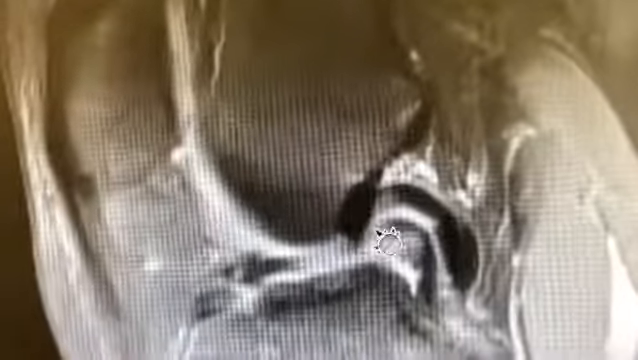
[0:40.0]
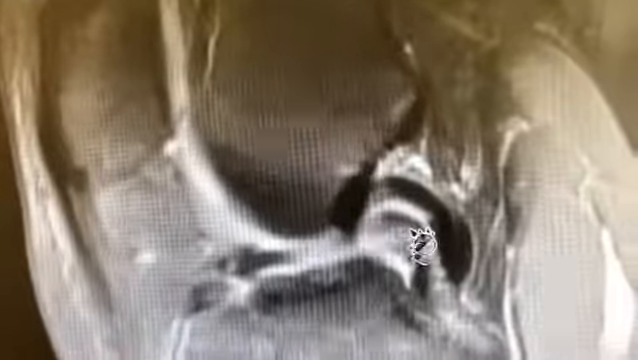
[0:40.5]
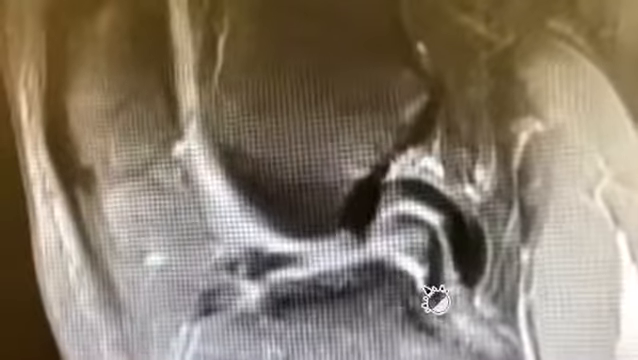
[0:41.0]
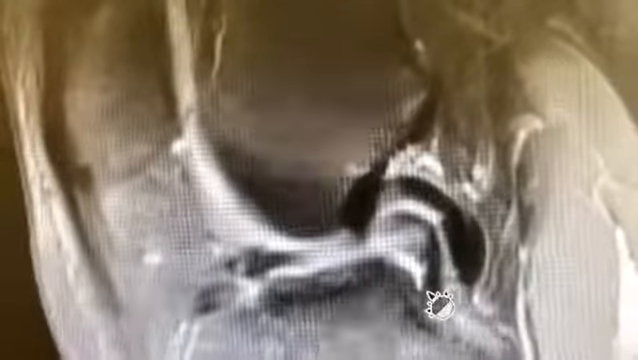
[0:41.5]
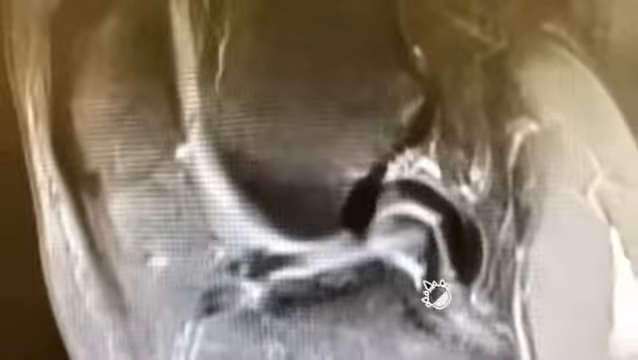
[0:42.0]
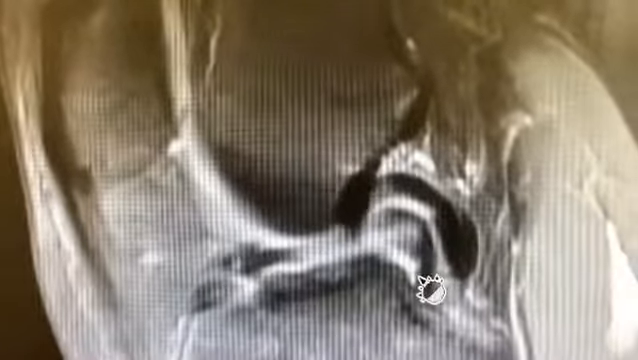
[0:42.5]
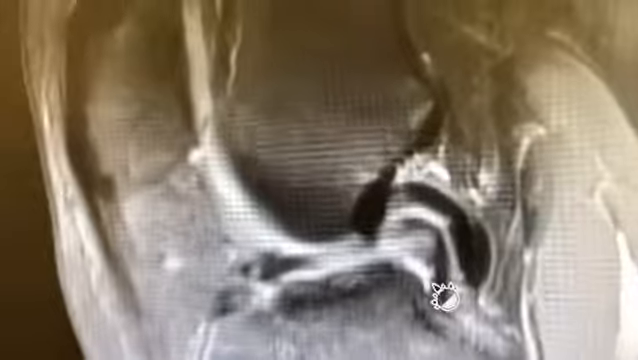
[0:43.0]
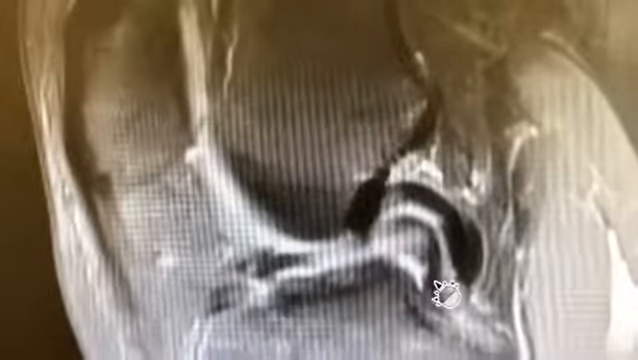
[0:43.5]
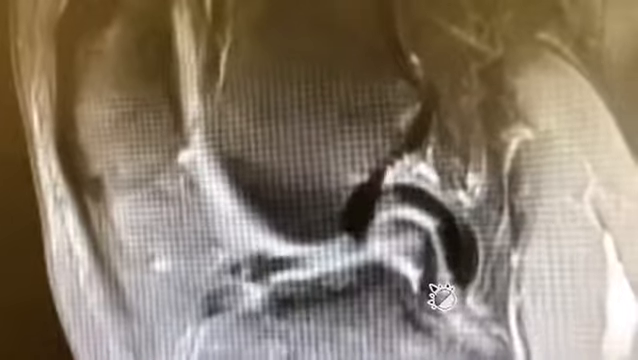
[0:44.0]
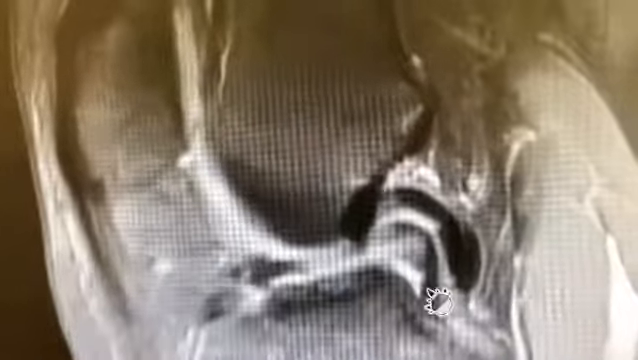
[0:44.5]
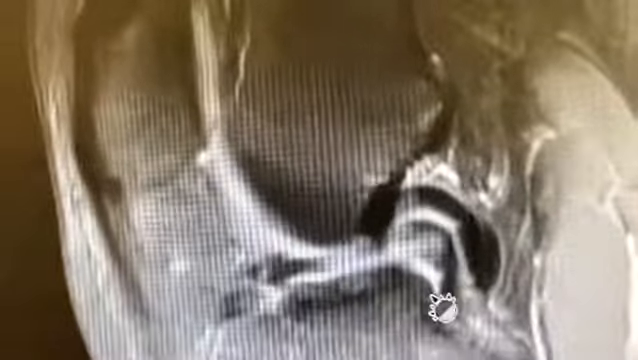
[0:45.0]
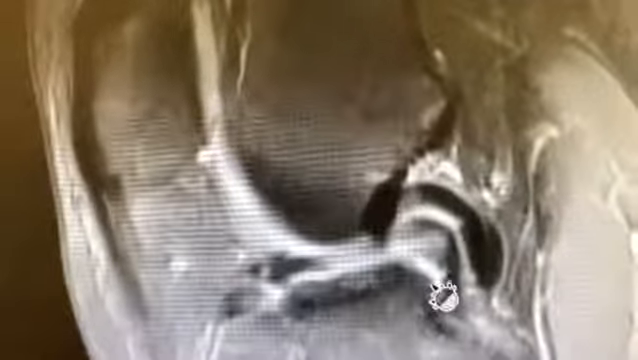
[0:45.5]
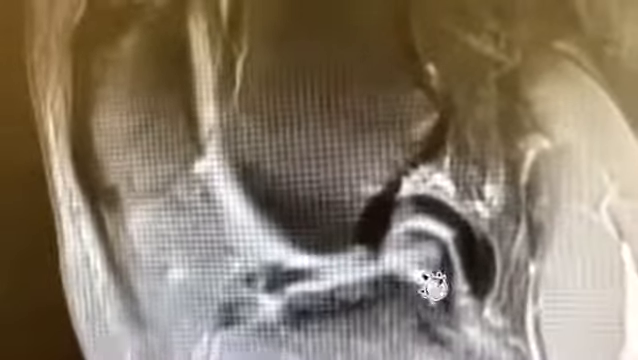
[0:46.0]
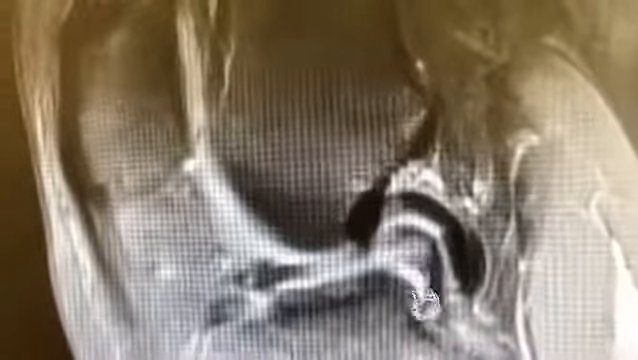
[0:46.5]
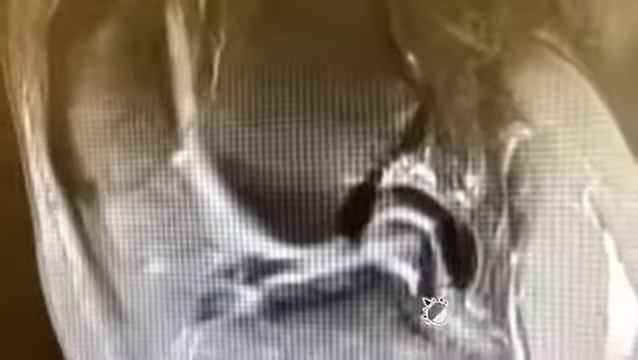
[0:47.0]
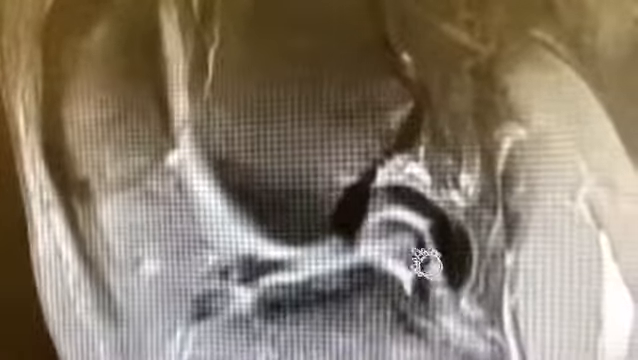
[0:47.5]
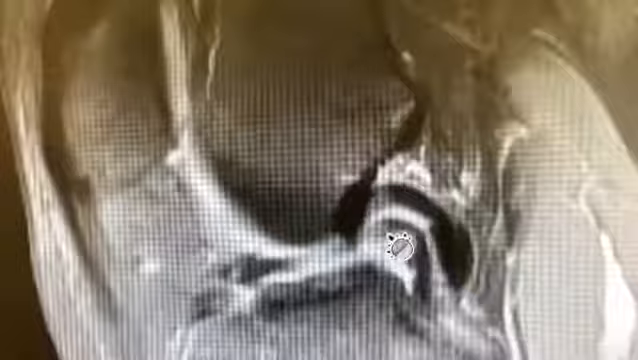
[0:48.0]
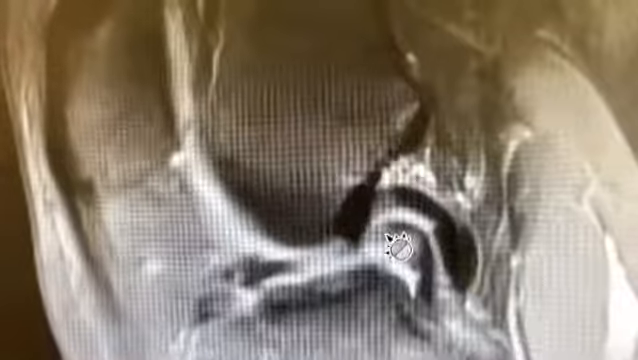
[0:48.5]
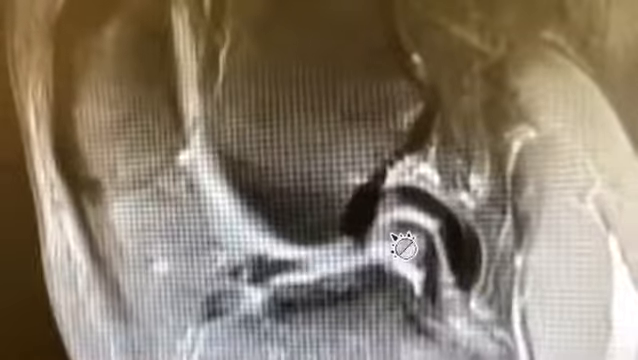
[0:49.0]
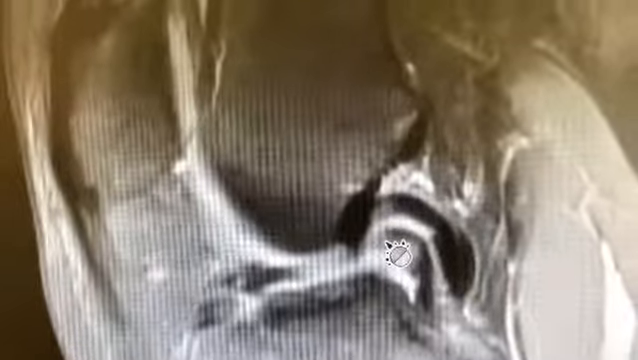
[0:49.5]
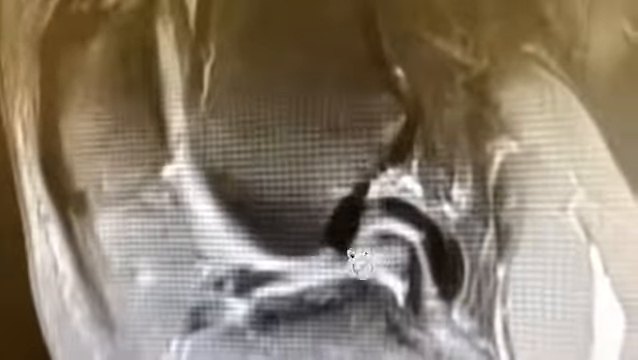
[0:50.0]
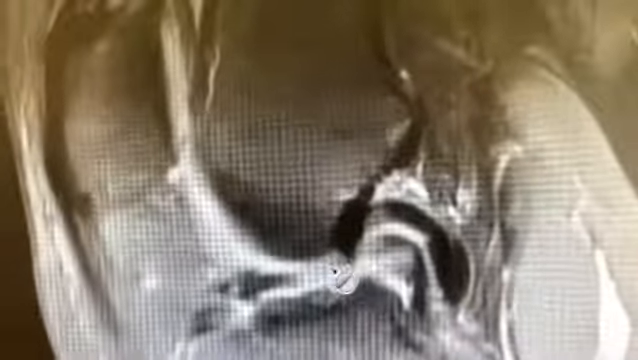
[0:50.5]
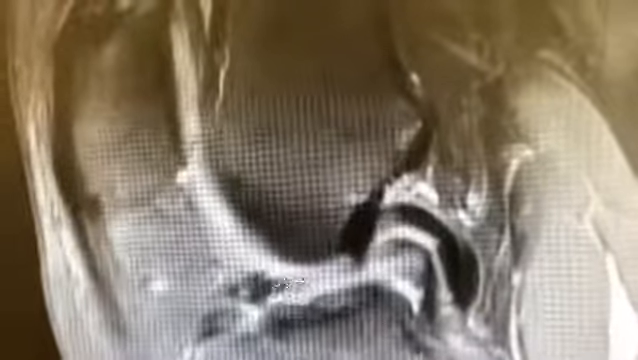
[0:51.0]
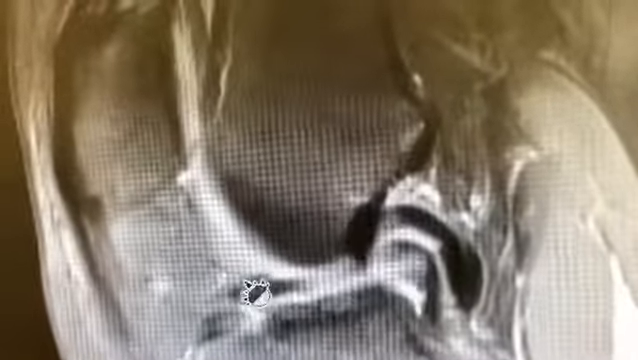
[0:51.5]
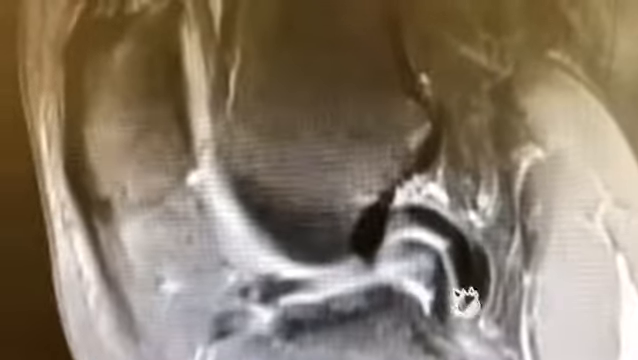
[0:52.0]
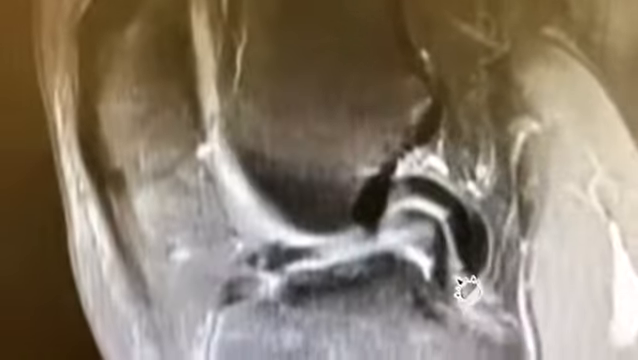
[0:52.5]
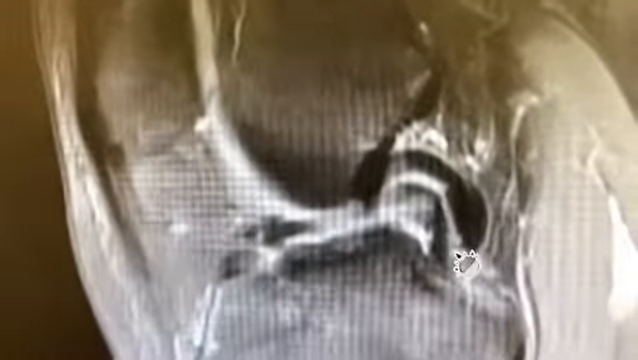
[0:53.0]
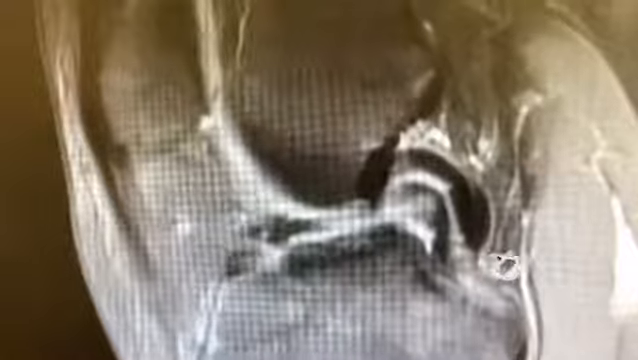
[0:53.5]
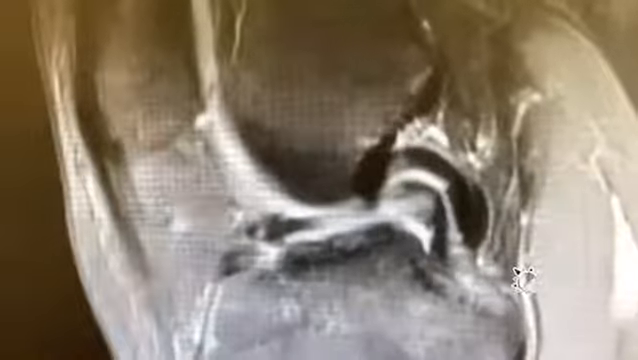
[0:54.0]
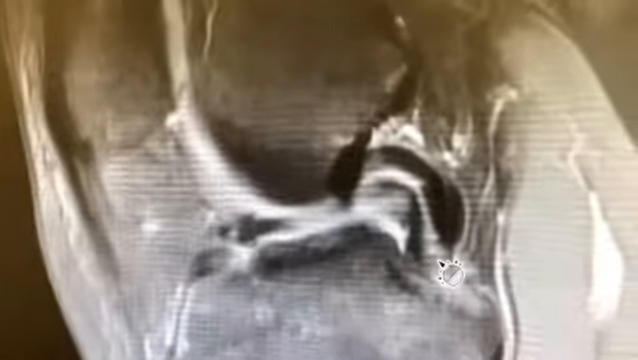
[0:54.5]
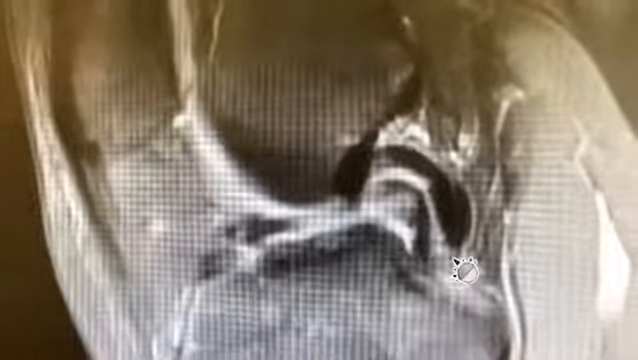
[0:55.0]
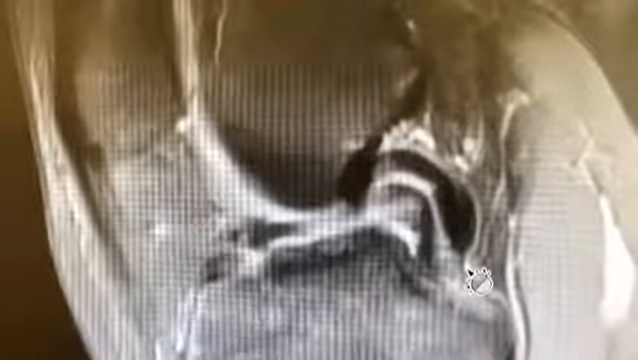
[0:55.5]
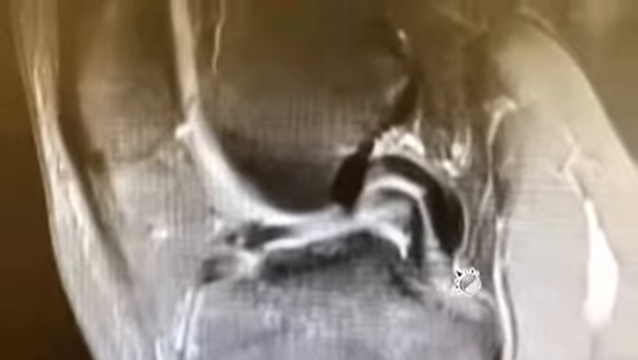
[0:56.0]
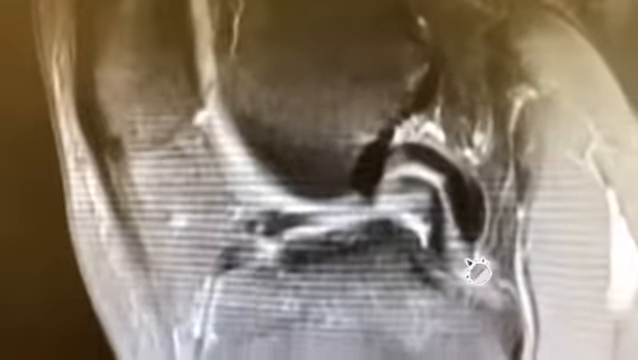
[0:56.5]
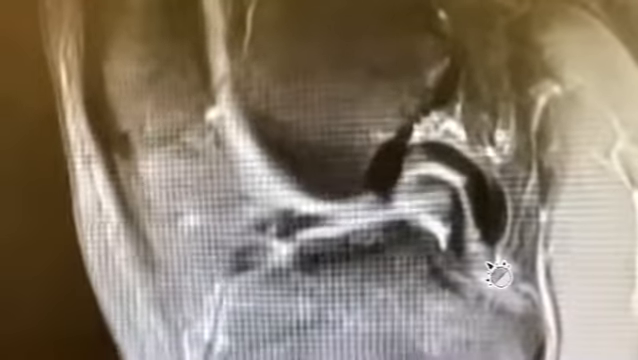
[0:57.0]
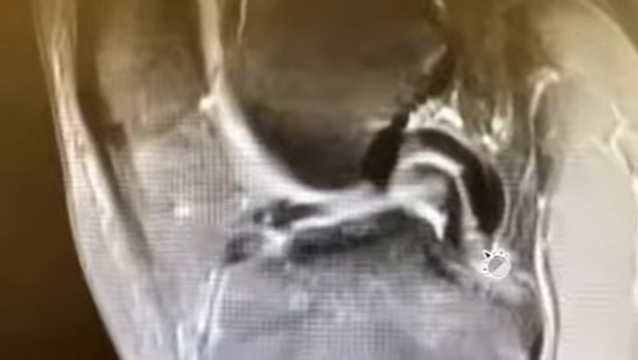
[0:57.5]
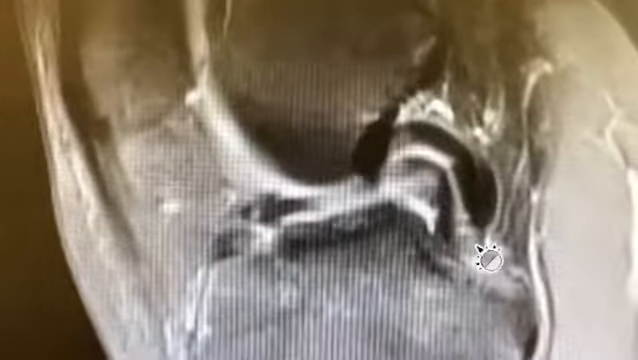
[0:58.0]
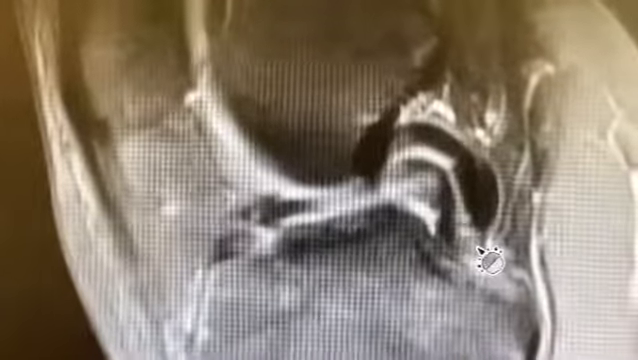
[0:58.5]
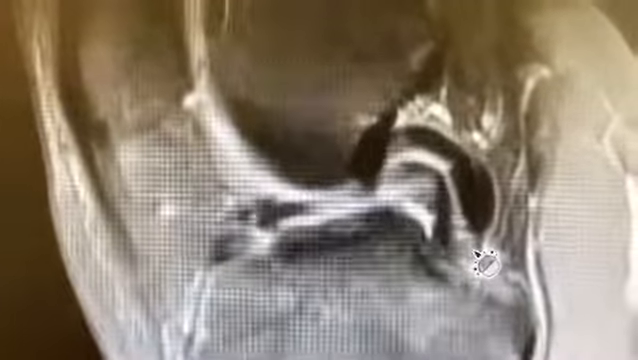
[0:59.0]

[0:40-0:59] The MRI or x-ray stays focused on the same black curvature in the knee, with muscle and cartilage around it; the muscle looks like it goes underneath the black curvature. The mouse pointer is now focused more on the smaller black curvature underneath the original one. It makes a semi-circle around a white area underneath it, which looks like possible cartilage or muscle somewhat sticking out. The person controlling the mouse pointer then focuses more on the bottom or end of the right side of the curvature, while still focusing on the area beneath it where the white muscle or cartilage is, and stays there for several seconds. Toward the end, the pointer traces the line where the muscle and cartilage start to go up to where the muscle is.